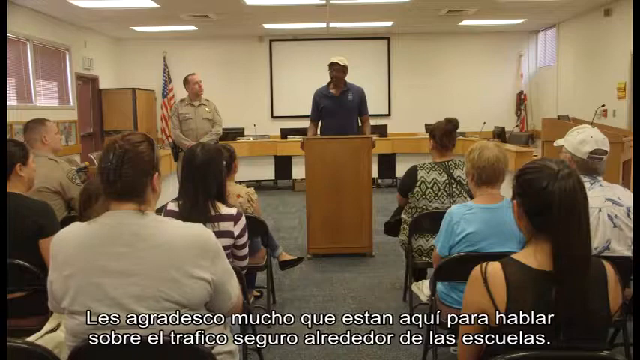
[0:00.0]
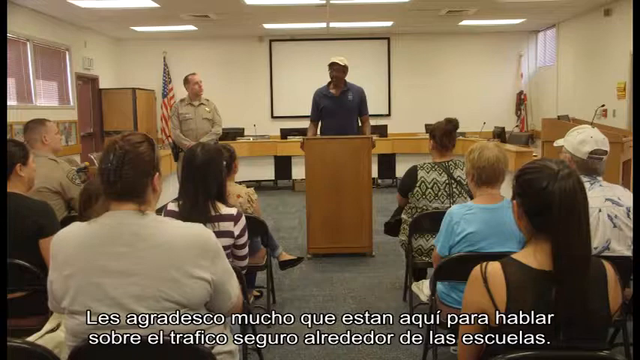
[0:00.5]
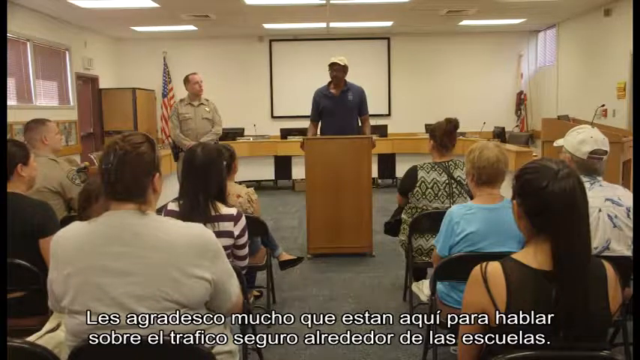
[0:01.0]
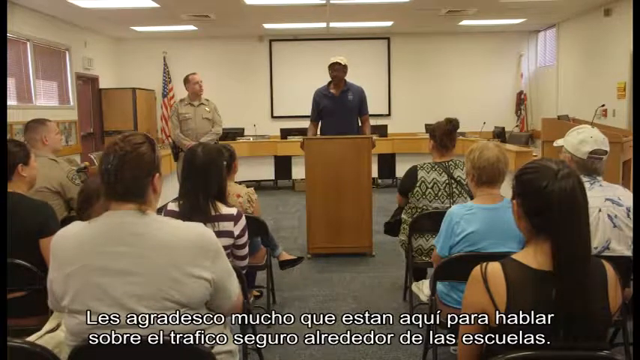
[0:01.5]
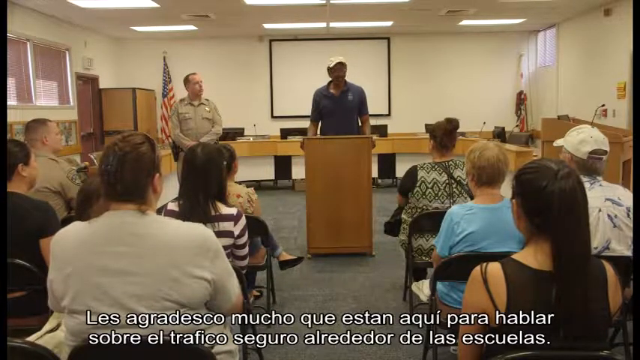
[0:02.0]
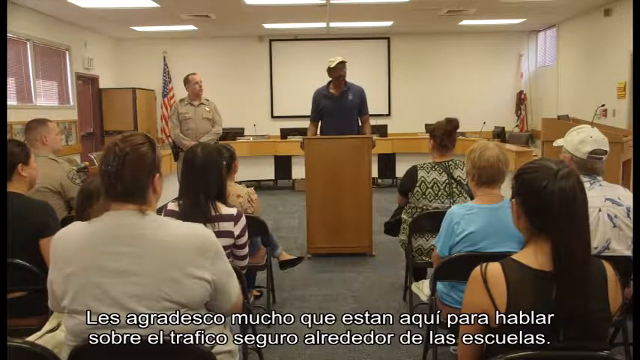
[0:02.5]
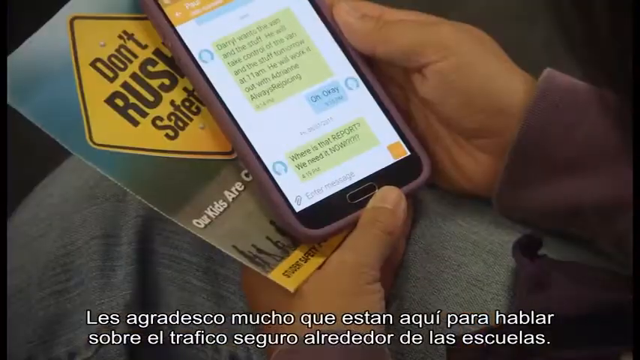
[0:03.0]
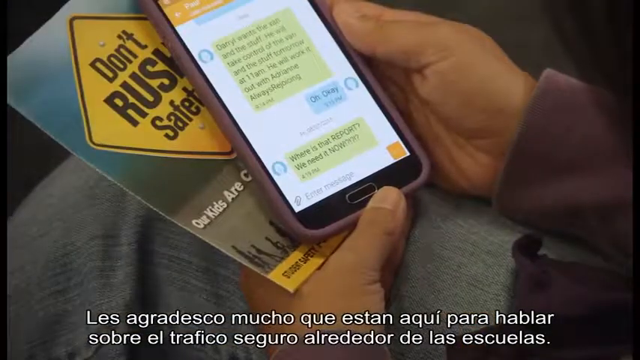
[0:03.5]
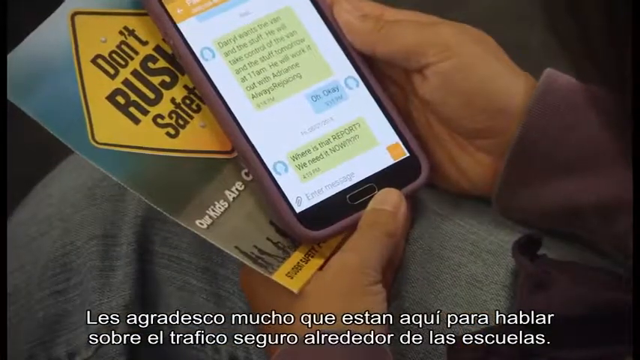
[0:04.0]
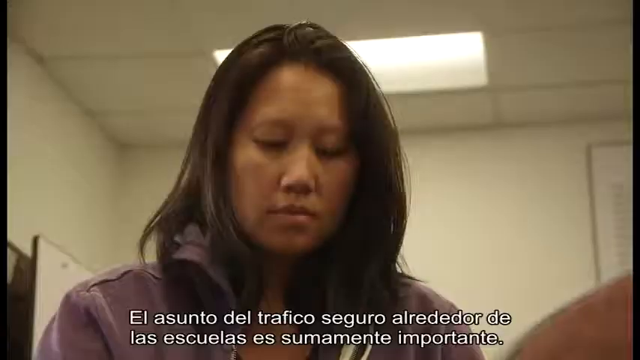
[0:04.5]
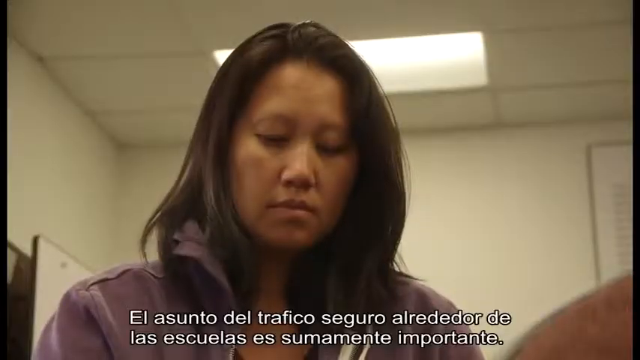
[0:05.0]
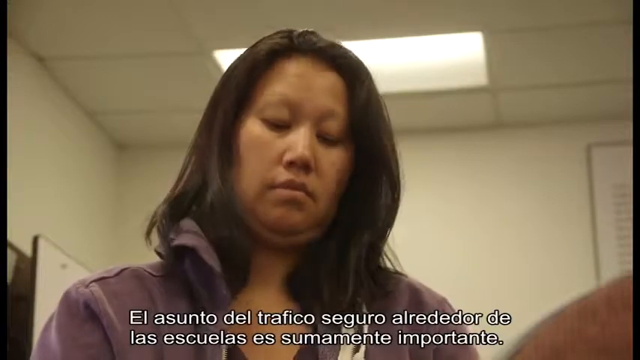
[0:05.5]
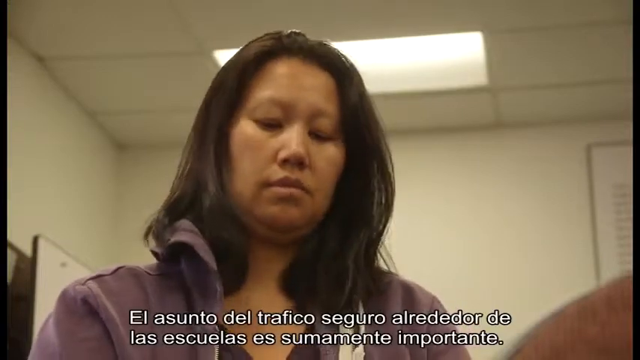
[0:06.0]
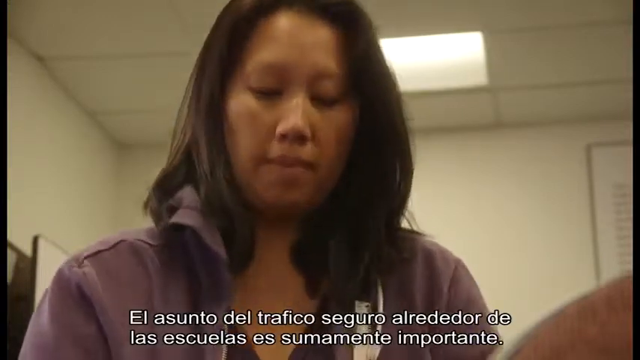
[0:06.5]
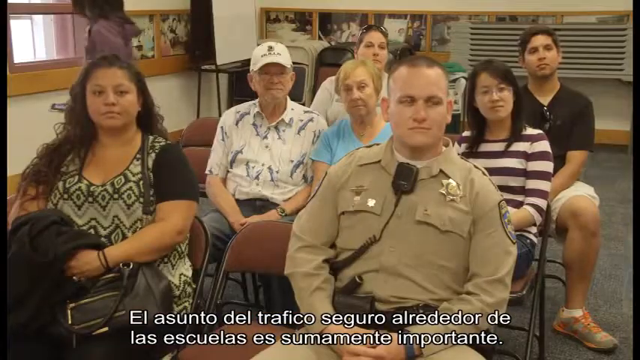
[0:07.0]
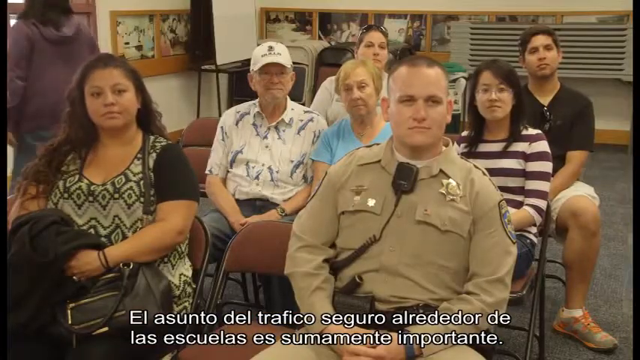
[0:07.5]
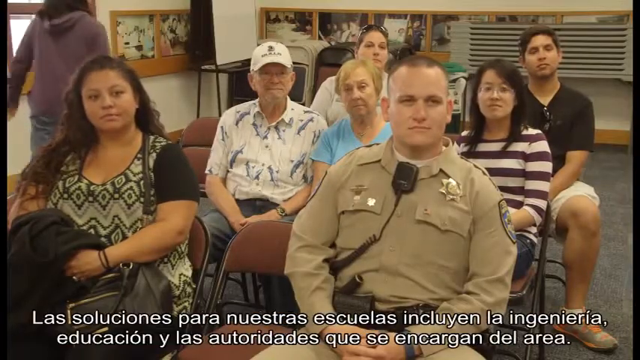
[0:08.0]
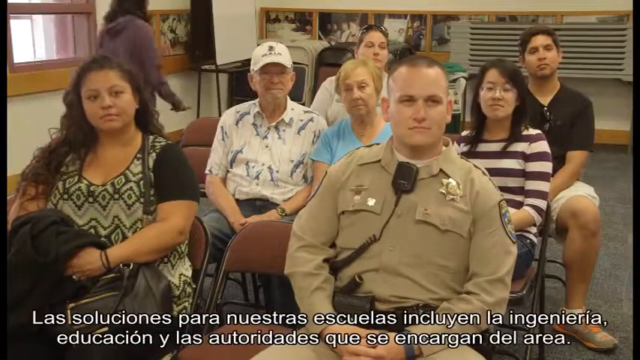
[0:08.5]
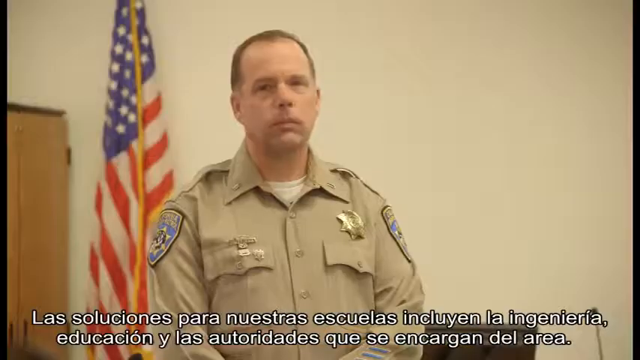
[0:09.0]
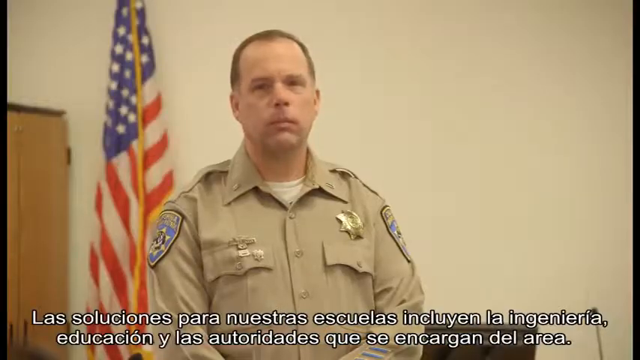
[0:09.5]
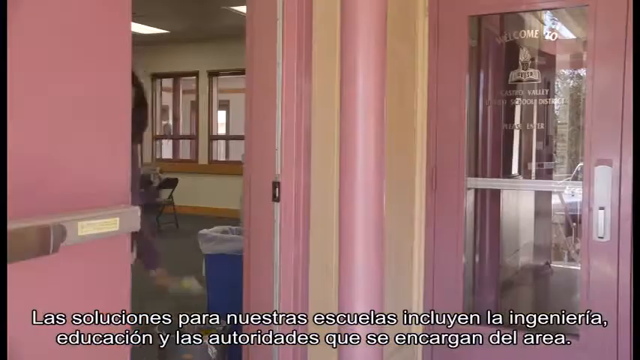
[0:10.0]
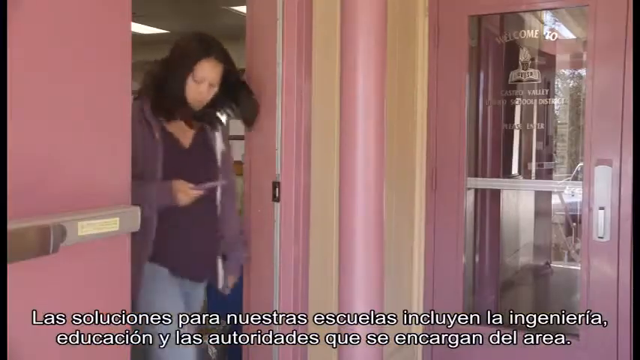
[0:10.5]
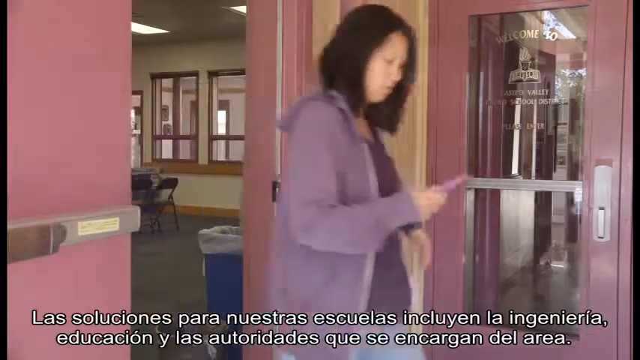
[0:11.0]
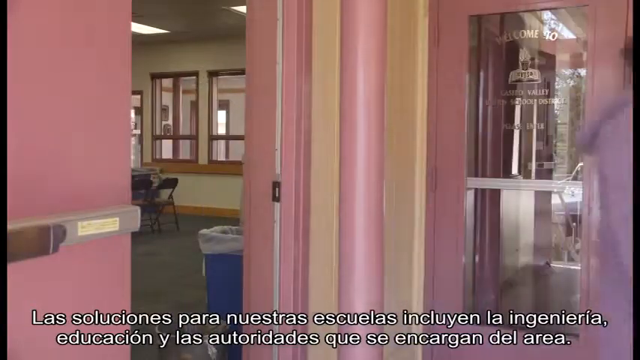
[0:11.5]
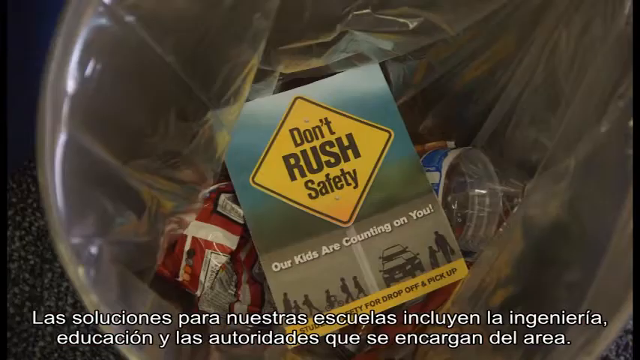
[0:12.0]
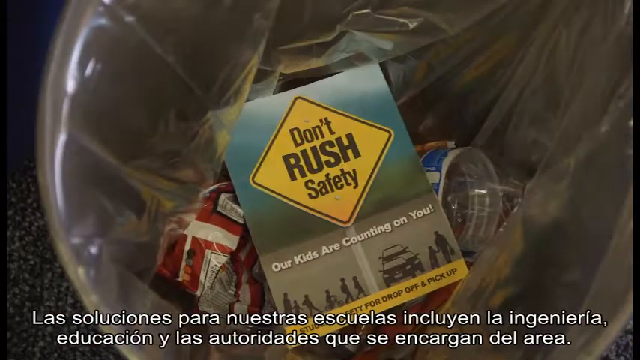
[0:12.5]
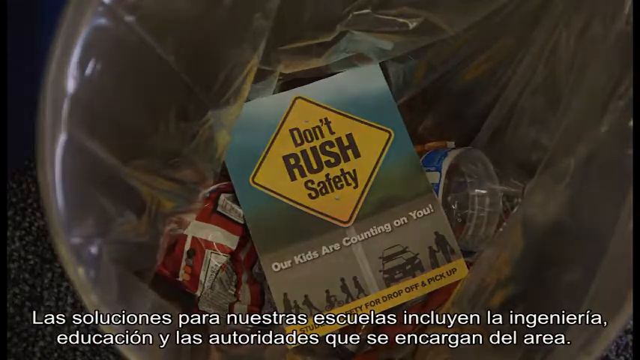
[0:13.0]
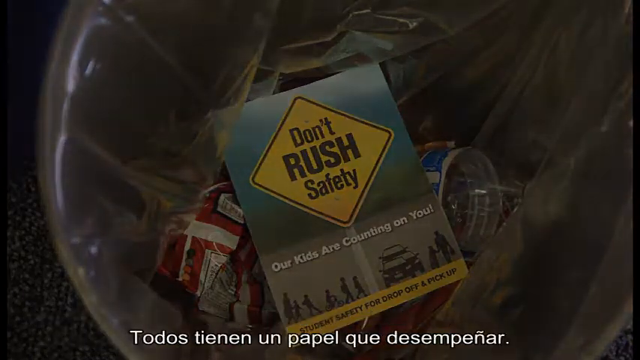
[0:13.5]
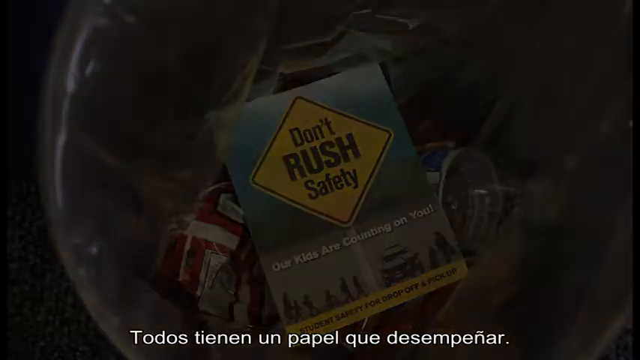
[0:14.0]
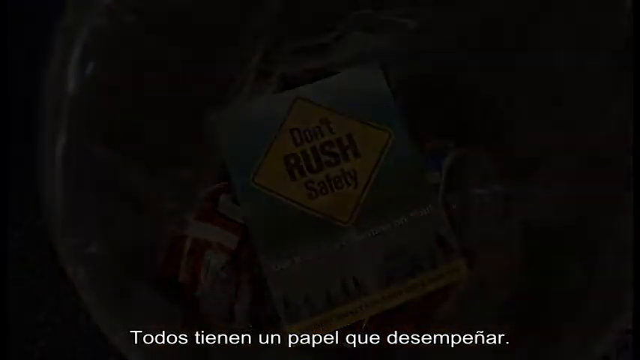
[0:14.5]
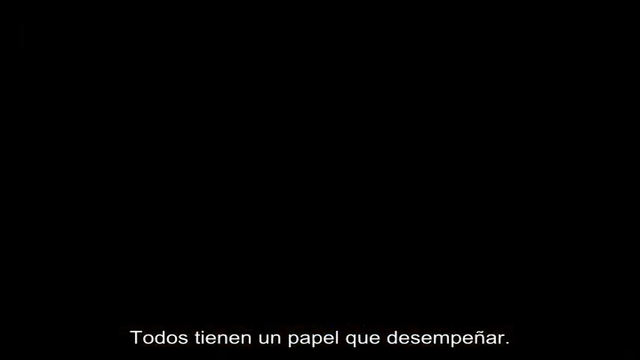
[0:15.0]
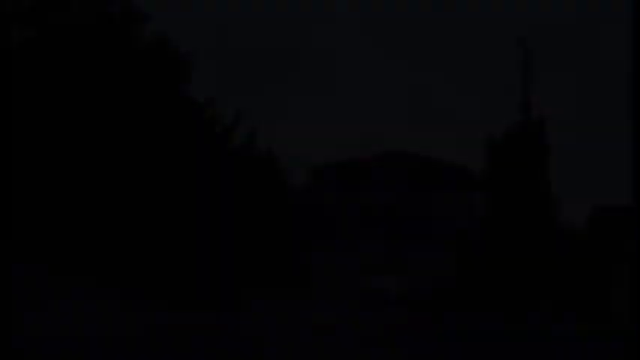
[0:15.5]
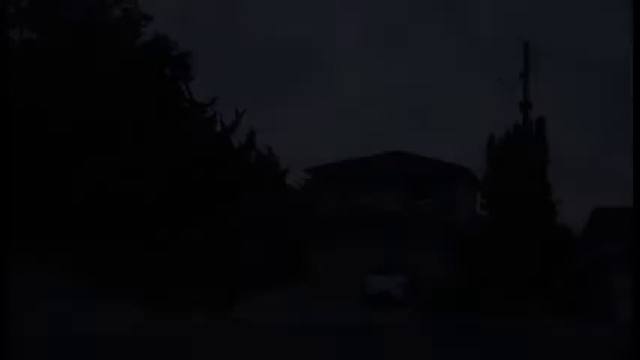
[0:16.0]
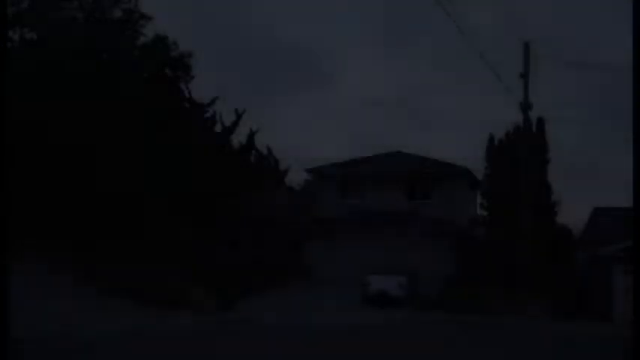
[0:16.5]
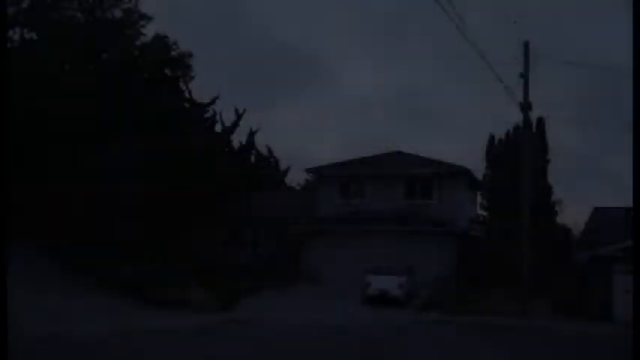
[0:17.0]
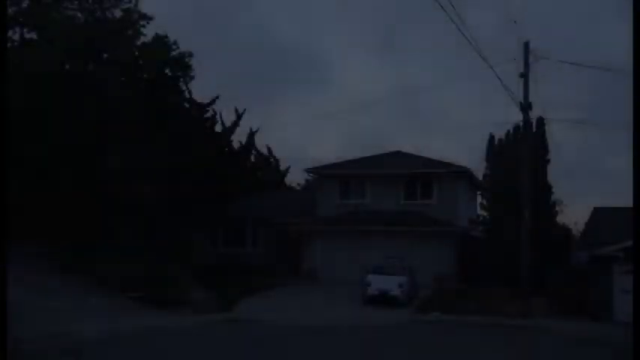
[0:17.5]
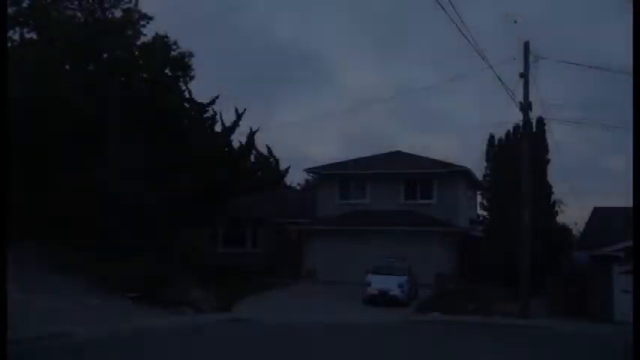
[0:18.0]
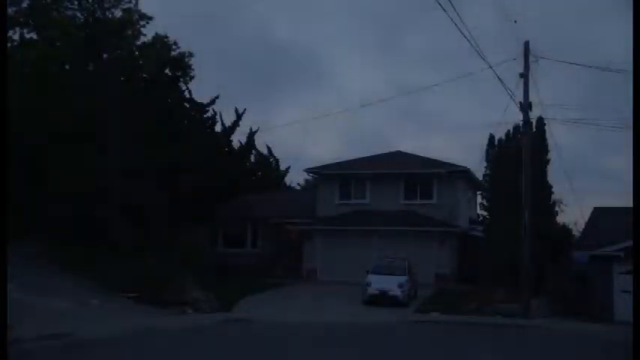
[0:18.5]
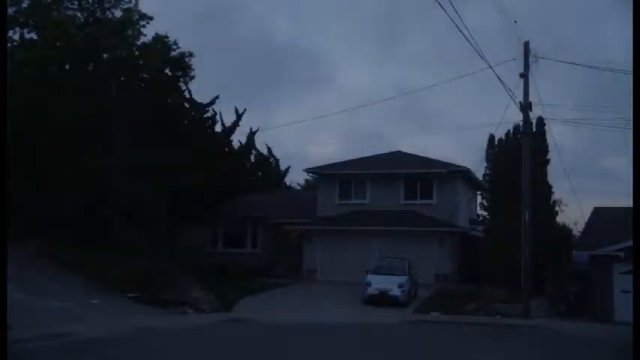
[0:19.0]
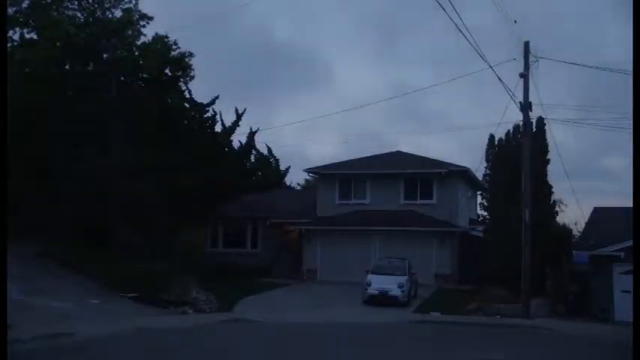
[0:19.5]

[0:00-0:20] A group of adults is gathered in what appears to be a public service announcement or a meeting, in a sort of boardroom. A gentleman stands in front of the people on a podium, and a police officer stands a few feet away from him. The video transitions to a lady holding a cell phone, looking at her chats, and a card that says "don't rush safety". The camera focuses on her face; she has shoulder-length brown hair and is looking down at her phone. A brief shot shows the individuals in the meeting, and in the same scene the lady walks out. Once she steps out, the card she was holding is seen in the dustbin. The scene then transitions to an image of a house and a car at night.